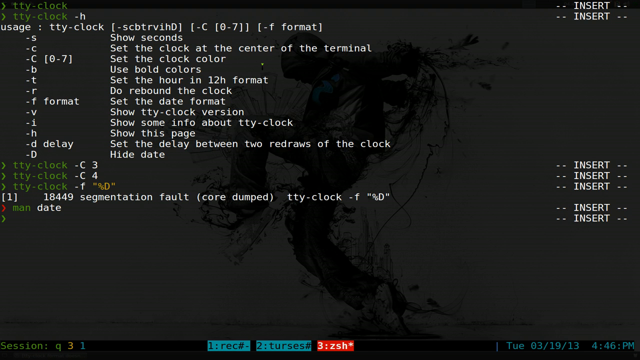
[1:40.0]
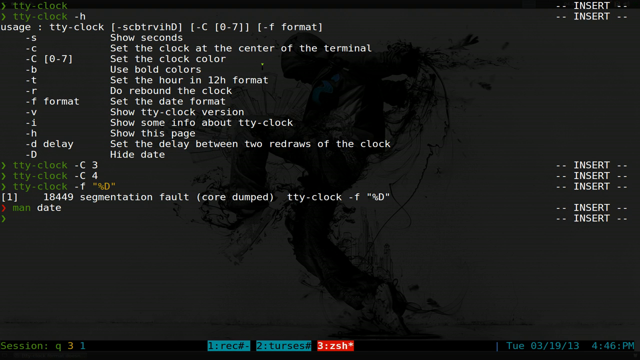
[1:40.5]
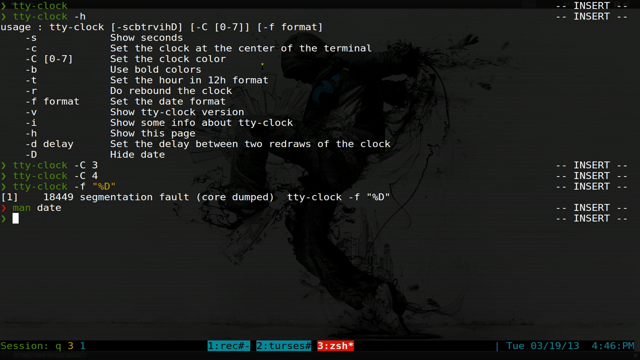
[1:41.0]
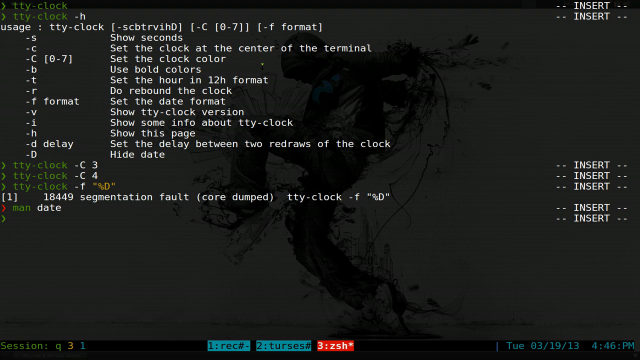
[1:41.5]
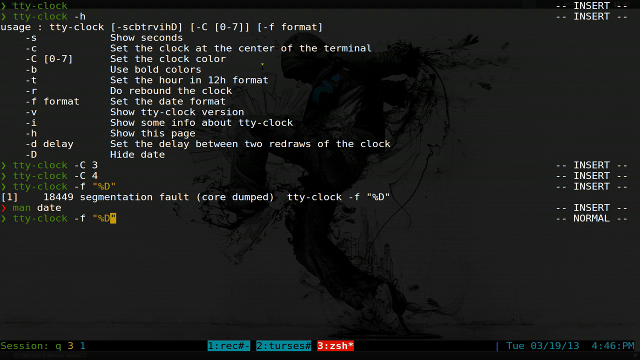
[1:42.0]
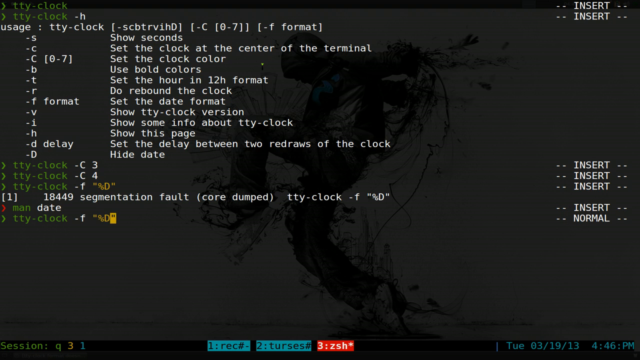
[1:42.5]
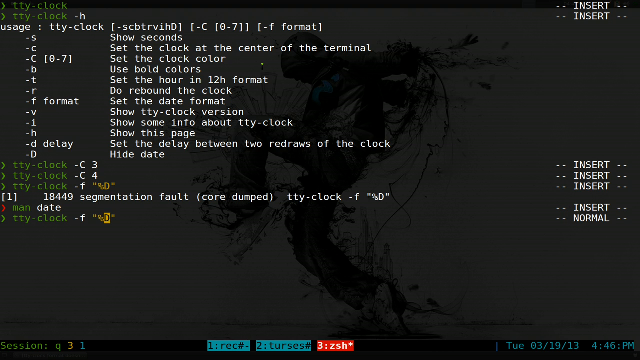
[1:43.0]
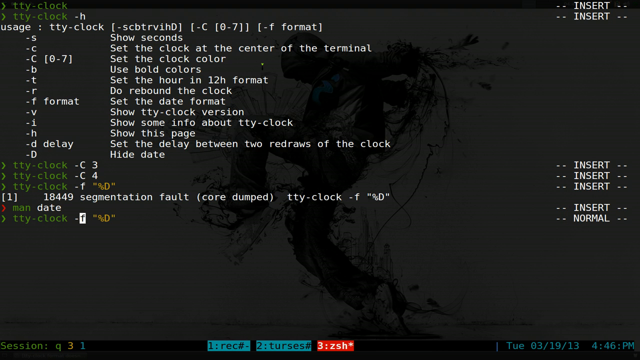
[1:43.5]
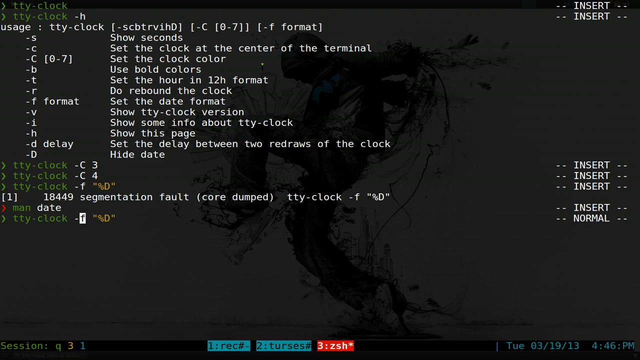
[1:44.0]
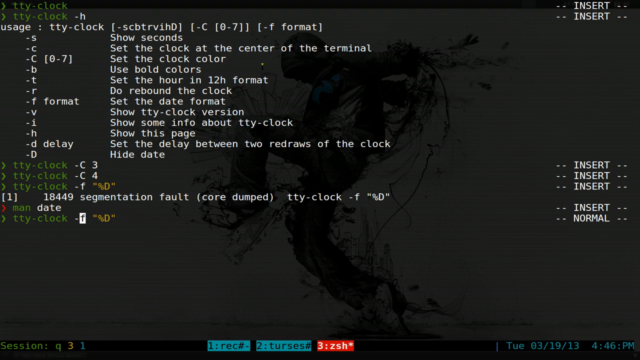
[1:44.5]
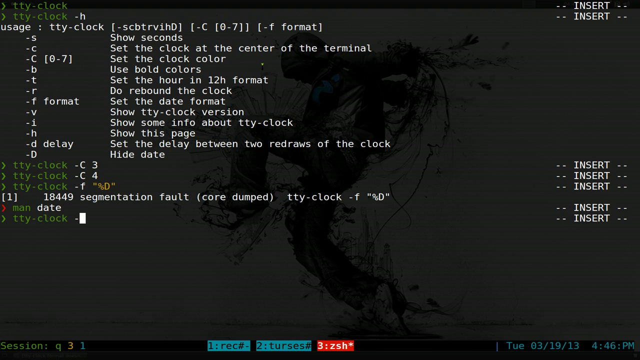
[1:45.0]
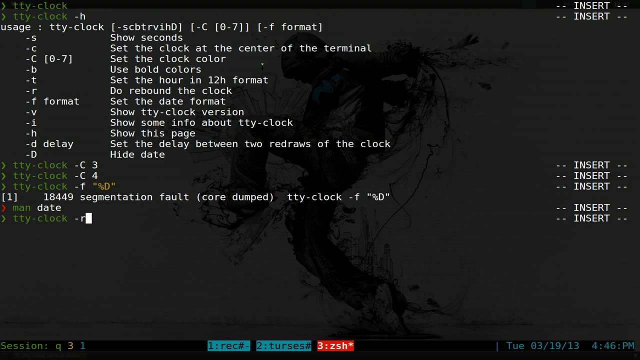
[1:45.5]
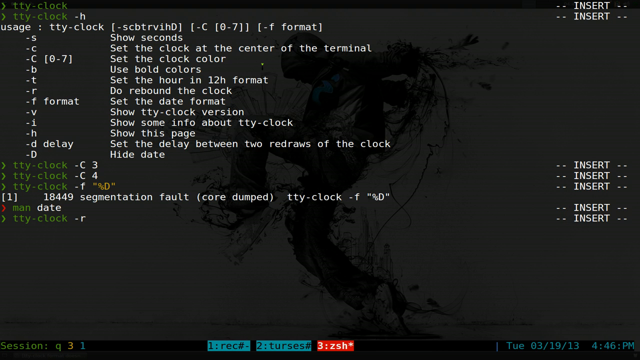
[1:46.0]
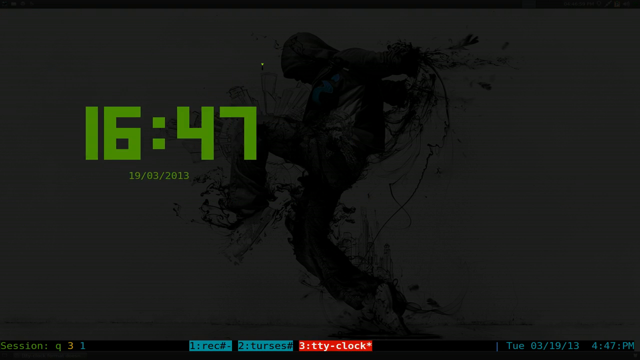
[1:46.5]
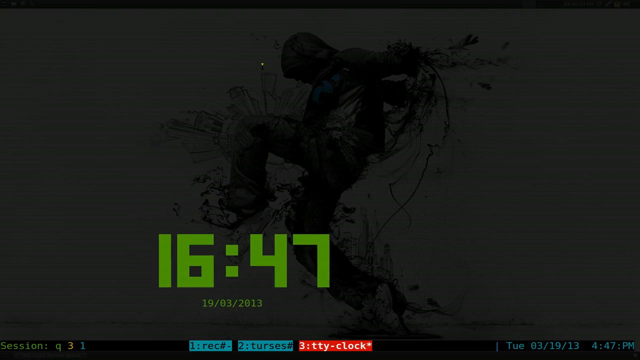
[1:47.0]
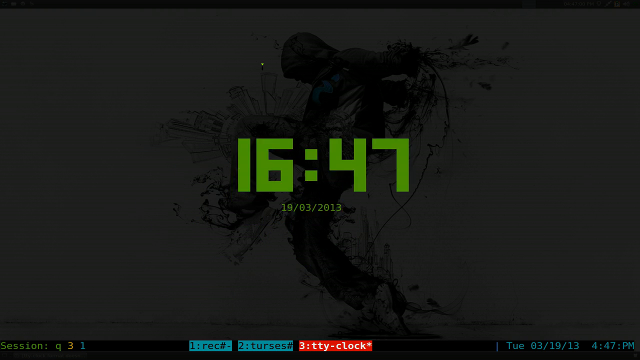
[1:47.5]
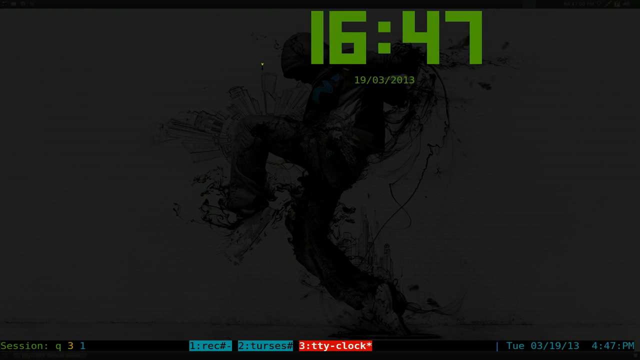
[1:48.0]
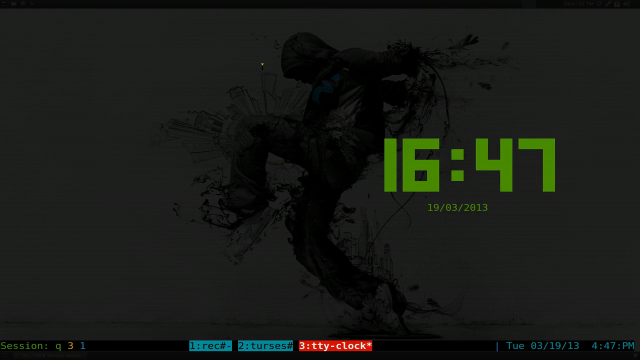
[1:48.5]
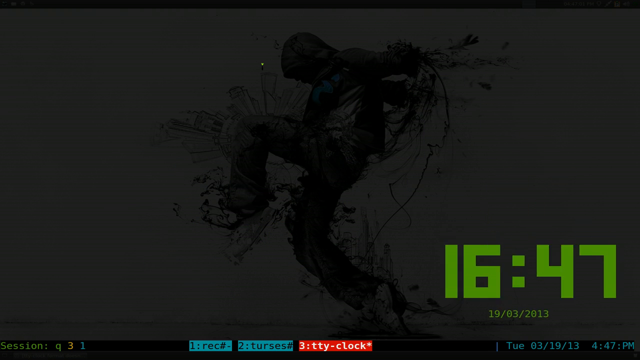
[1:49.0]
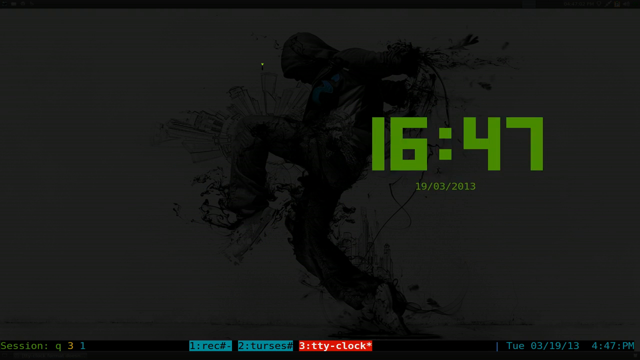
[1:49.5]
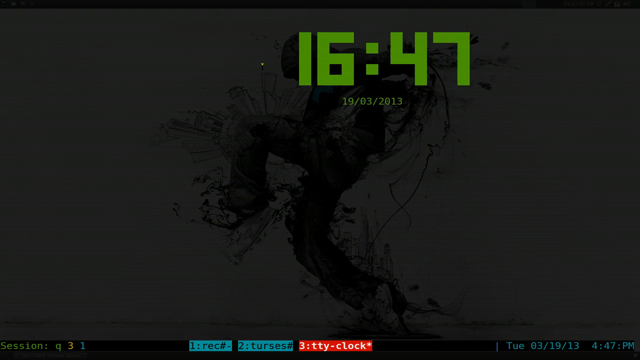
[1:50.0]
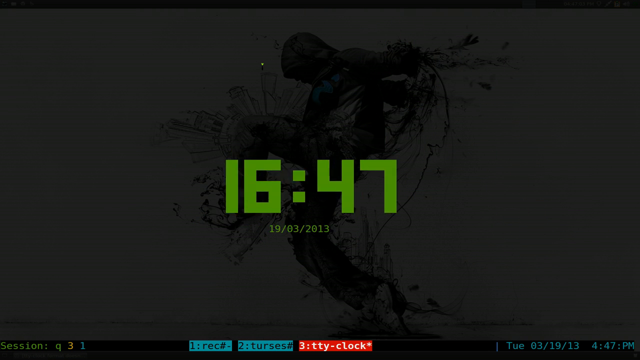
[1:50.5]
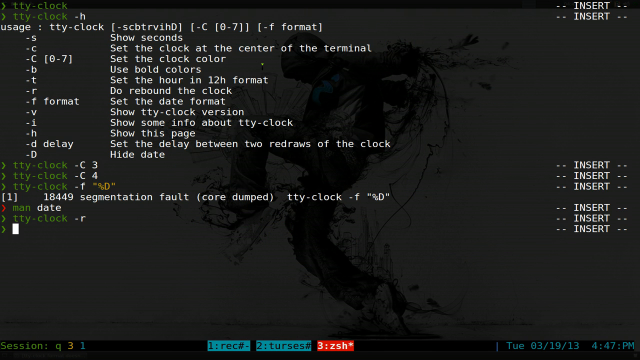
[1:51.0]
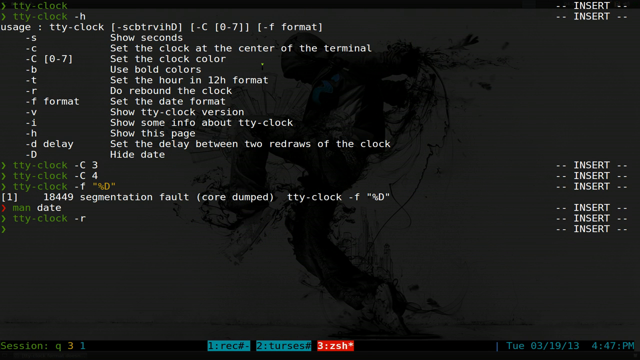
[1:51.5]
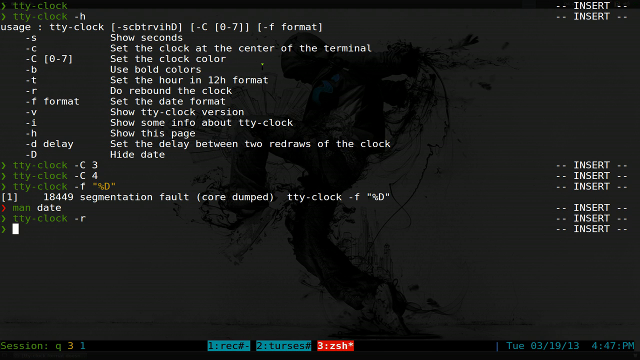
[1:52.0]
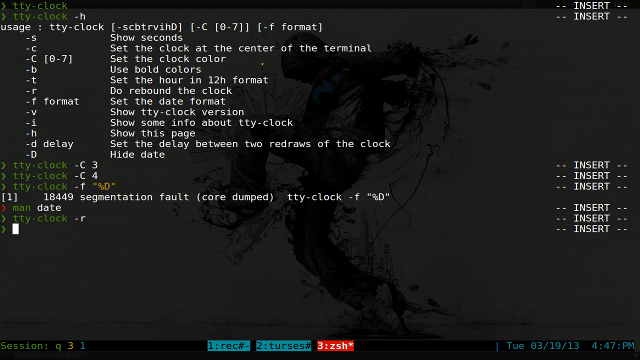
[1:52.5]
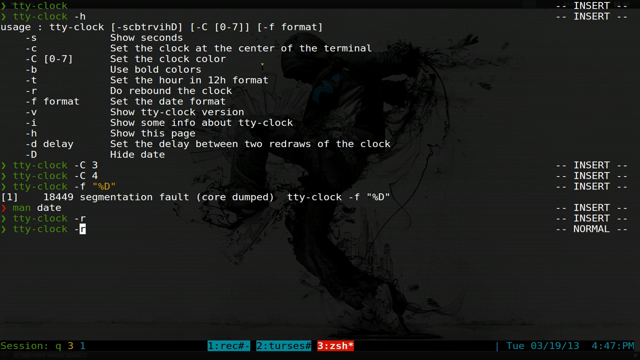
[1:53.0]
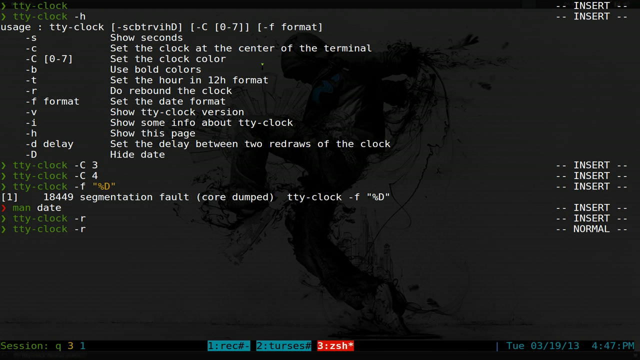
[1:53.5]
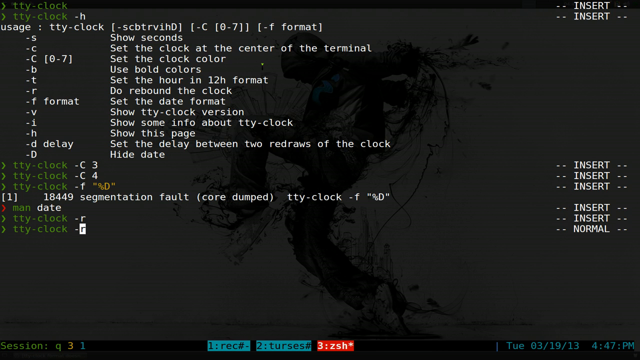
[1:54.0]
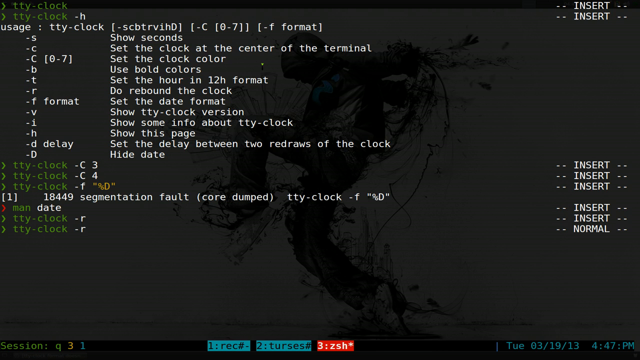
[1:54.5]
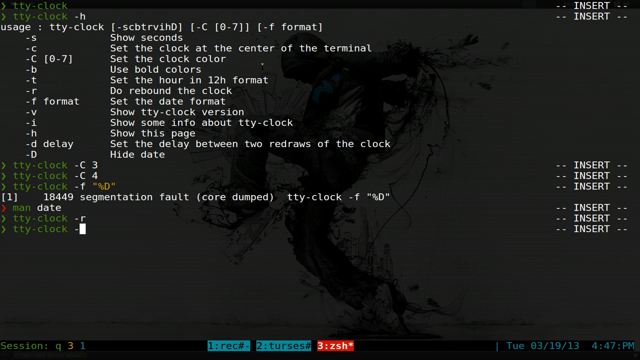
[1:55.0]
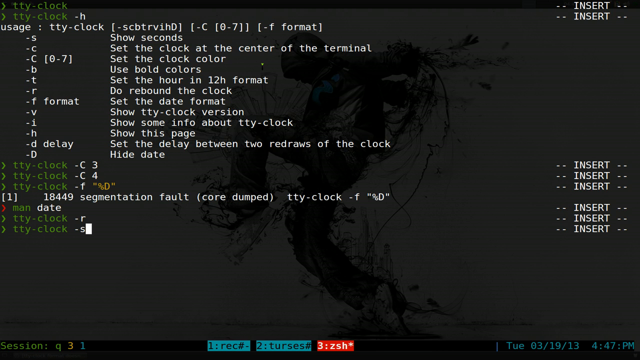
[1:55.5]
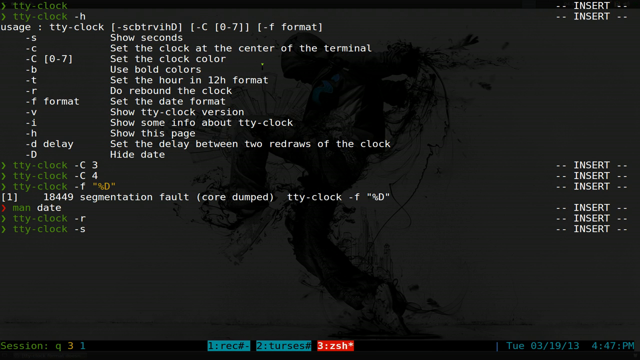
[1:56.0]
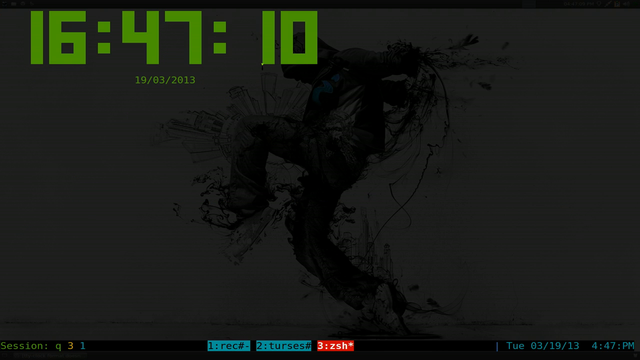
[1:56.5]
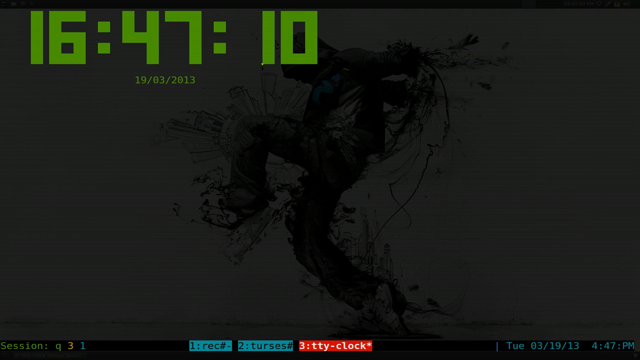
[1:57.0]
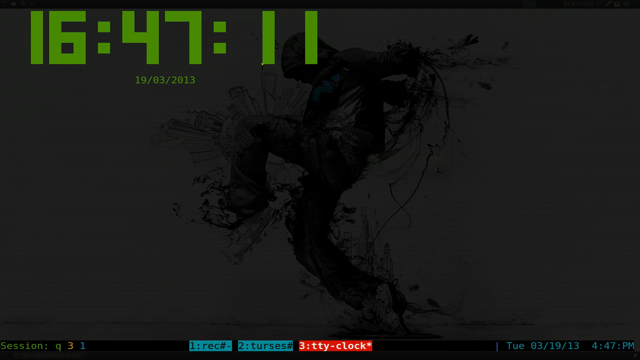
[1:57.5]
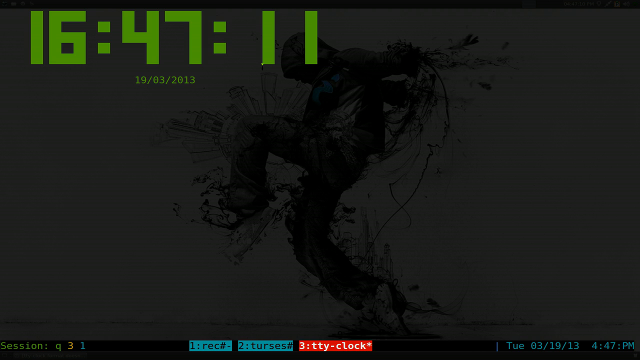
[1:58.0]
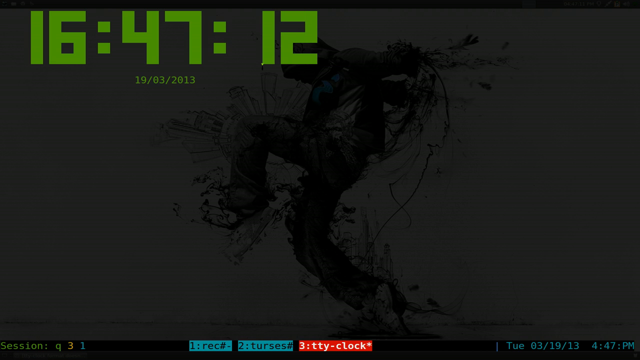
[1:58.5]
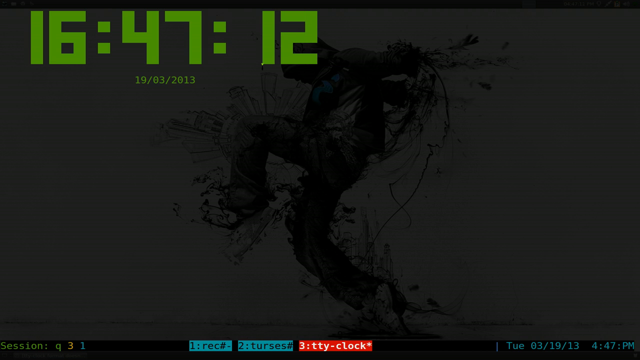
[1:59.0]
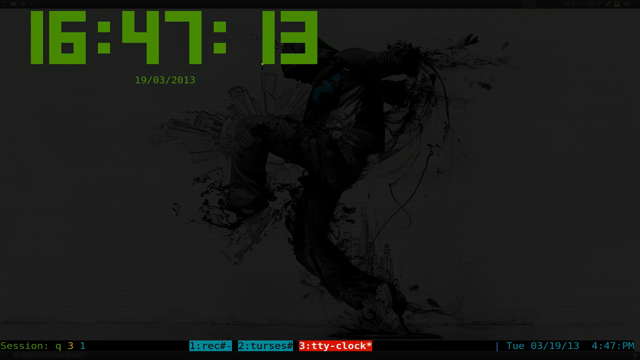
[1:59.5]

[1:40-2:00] A screen that looks like the command screen of an operating system has several rows of data written on it. The top two rows show the command "tty.clock", and below it are about six different usage options for that command. Below the options, the command has been entered three times with different usage types. The cursor blinks, and another option for tty.clock is entered, this time as "-f" and "\d". The cursor moves backwards and deletes it, then enters the option "r". The screen transitions to show the time and date, and the time "16:47" bounces up and down on the screen.